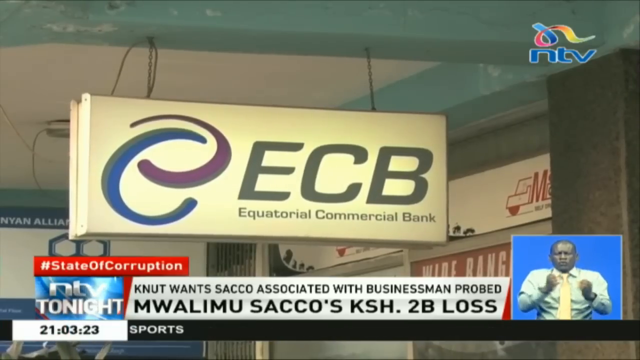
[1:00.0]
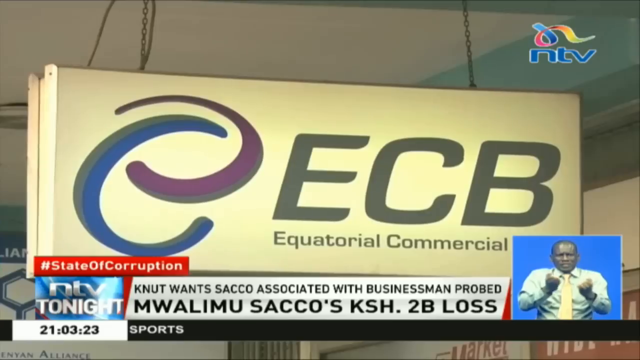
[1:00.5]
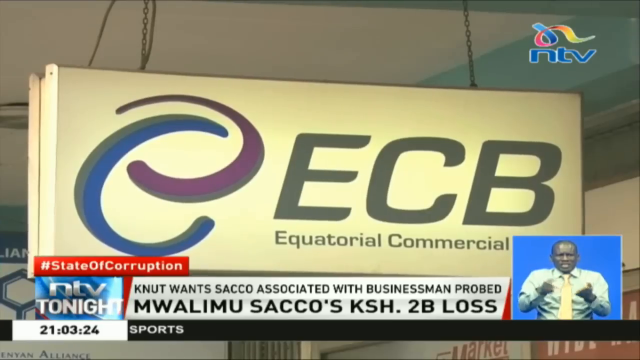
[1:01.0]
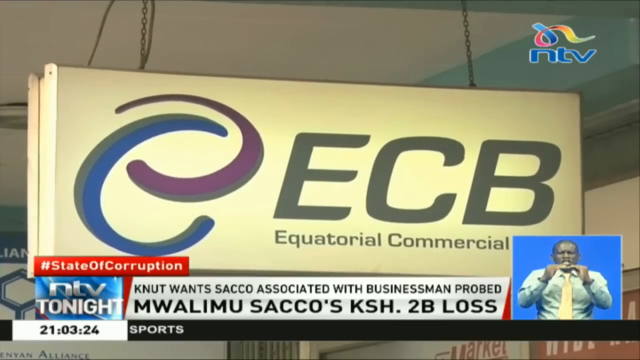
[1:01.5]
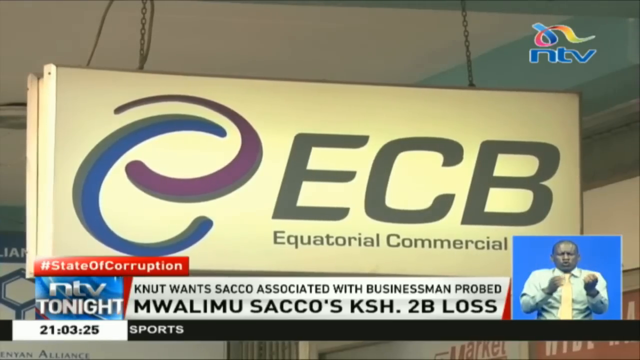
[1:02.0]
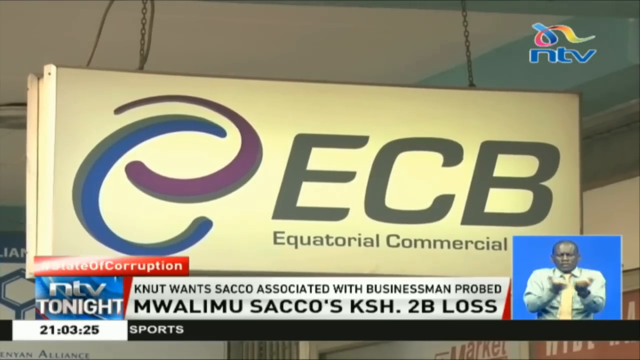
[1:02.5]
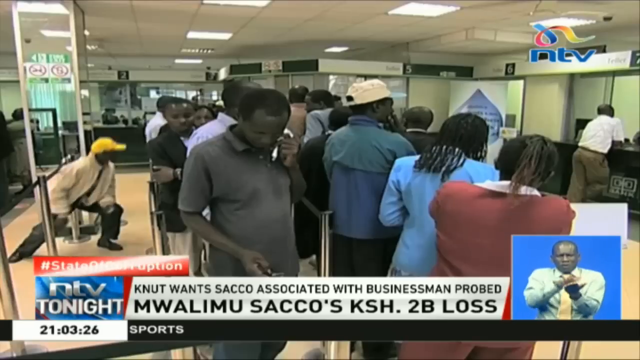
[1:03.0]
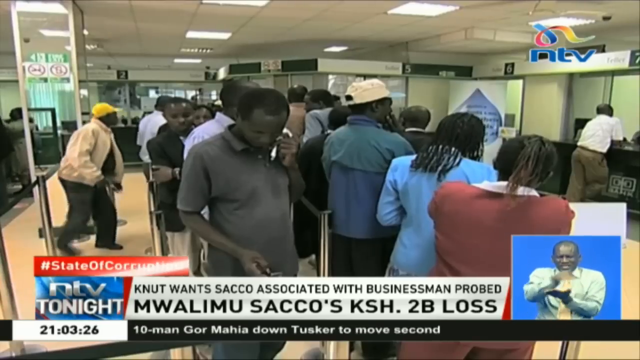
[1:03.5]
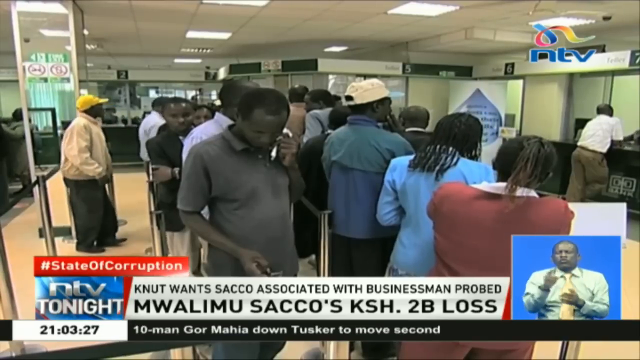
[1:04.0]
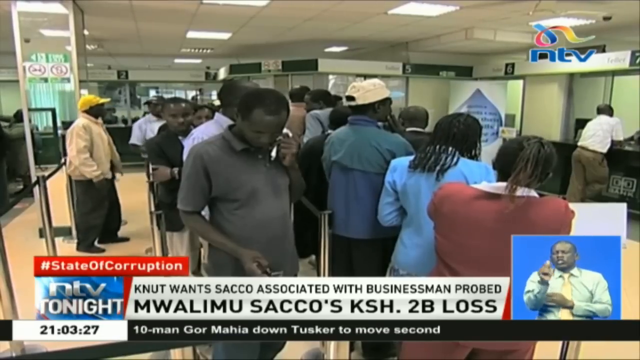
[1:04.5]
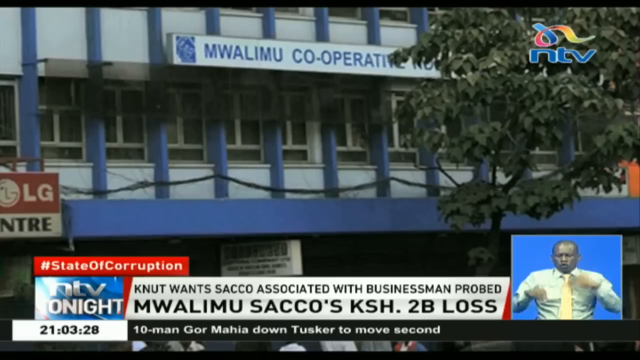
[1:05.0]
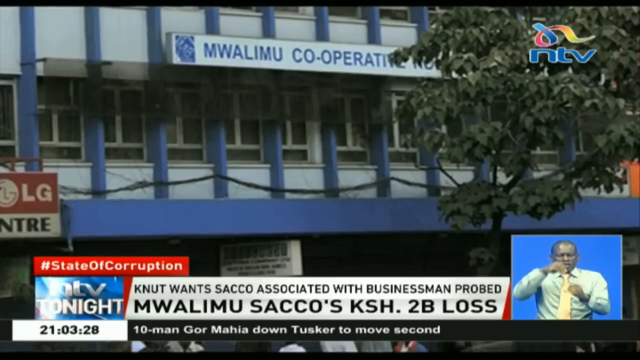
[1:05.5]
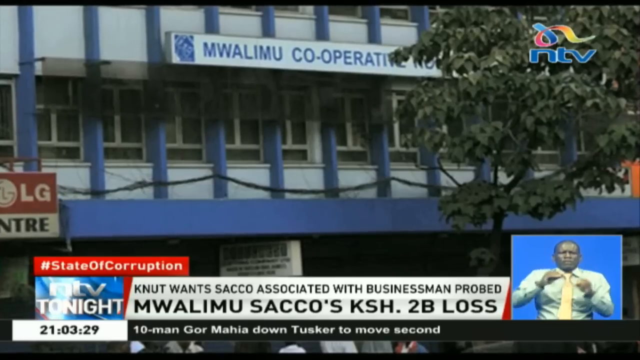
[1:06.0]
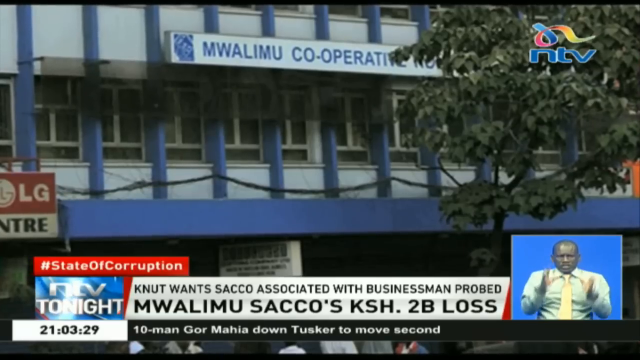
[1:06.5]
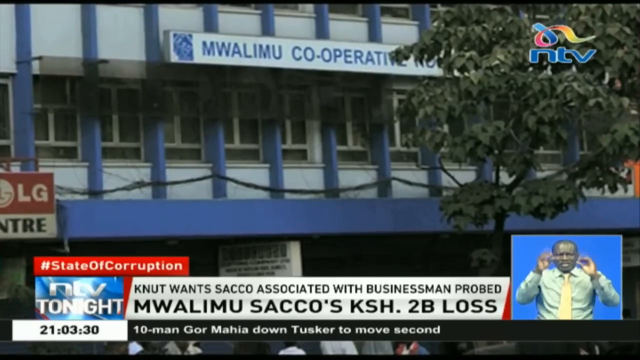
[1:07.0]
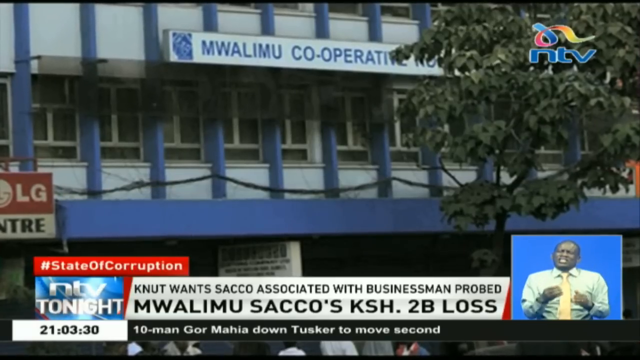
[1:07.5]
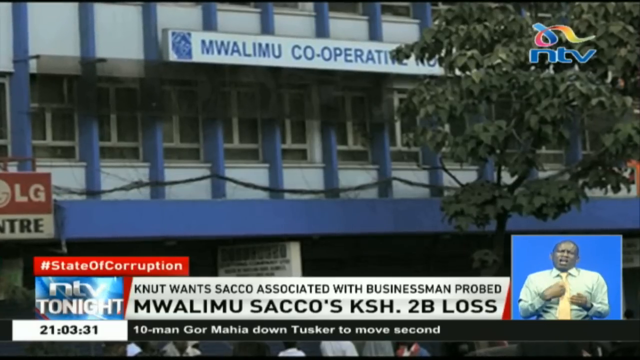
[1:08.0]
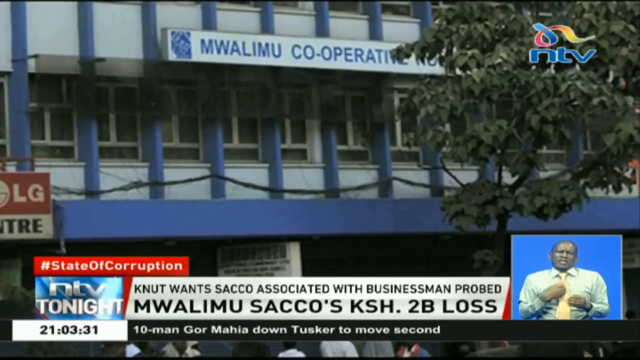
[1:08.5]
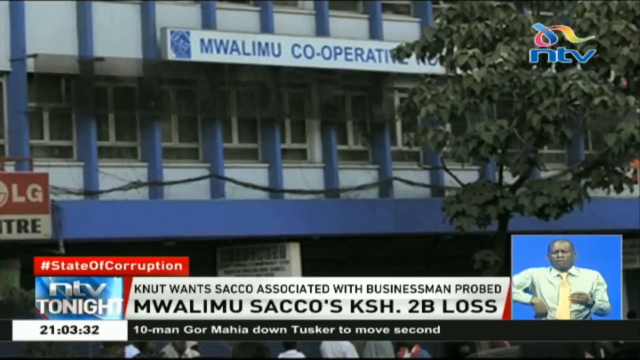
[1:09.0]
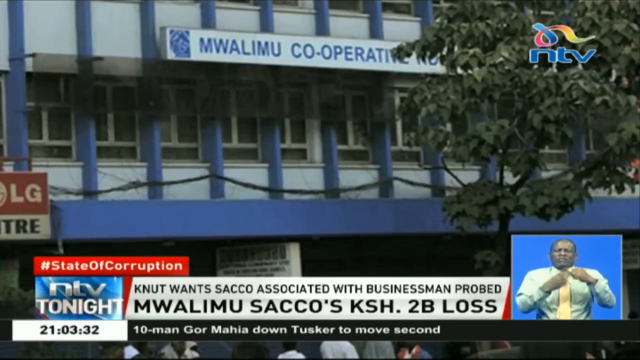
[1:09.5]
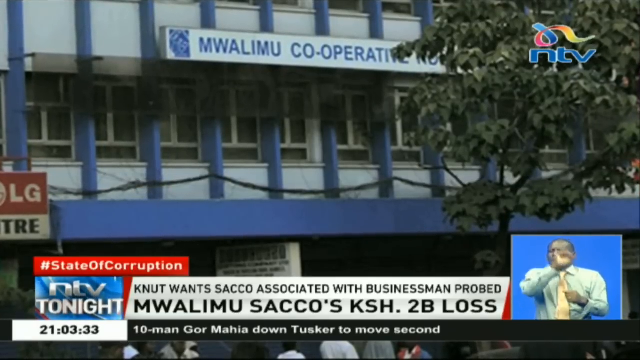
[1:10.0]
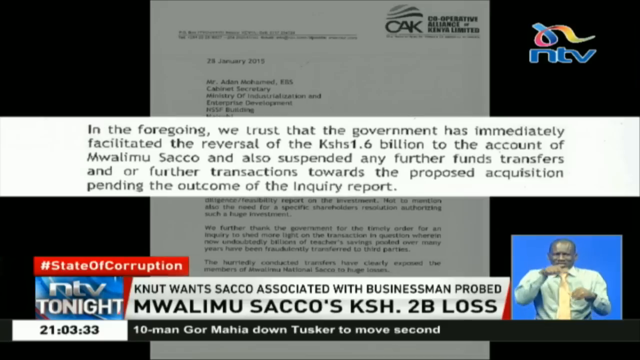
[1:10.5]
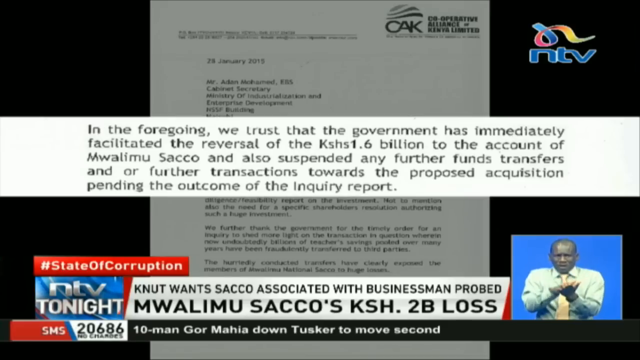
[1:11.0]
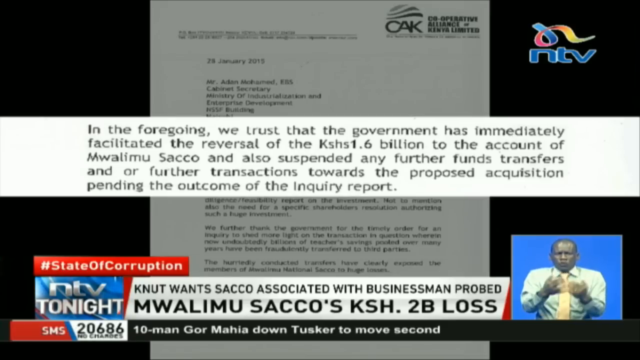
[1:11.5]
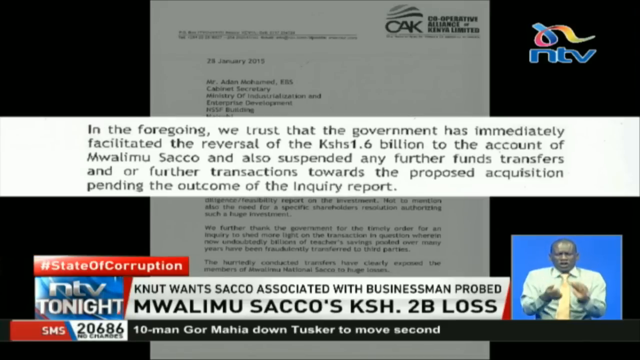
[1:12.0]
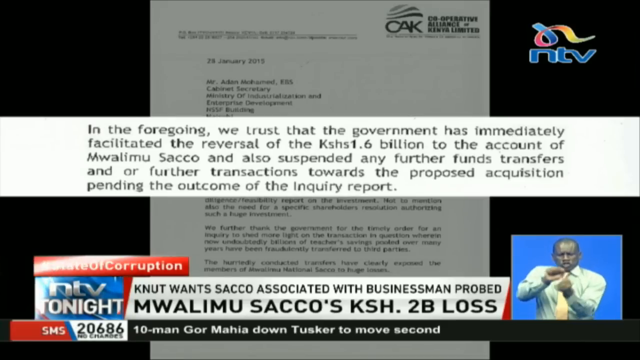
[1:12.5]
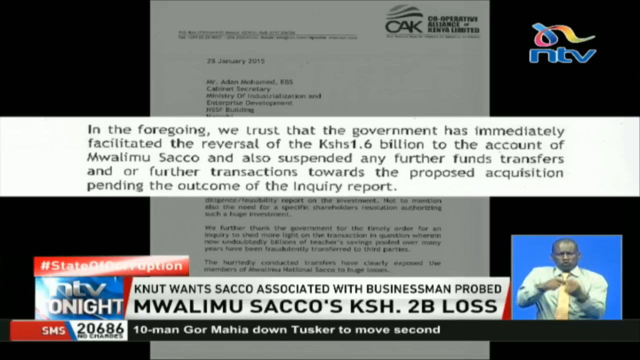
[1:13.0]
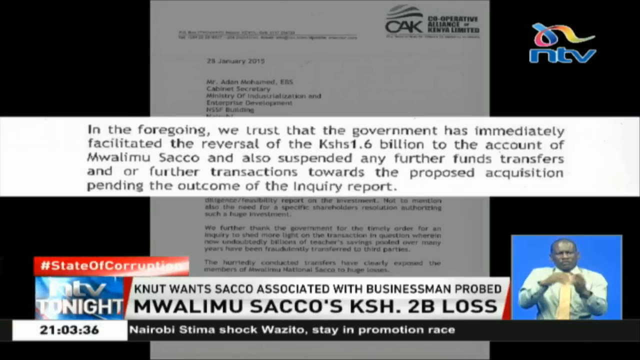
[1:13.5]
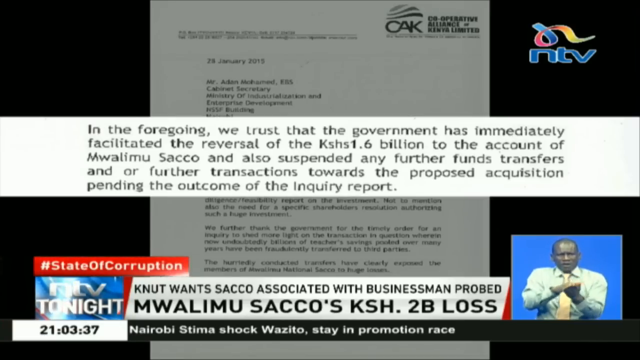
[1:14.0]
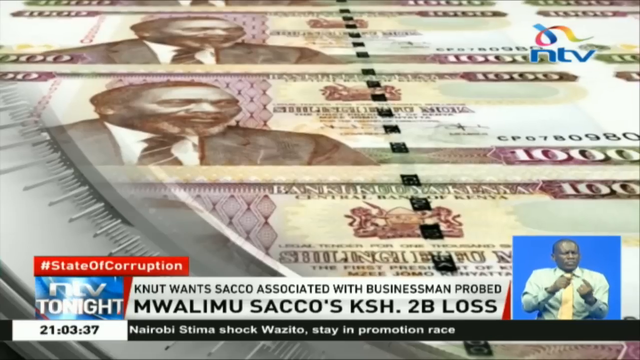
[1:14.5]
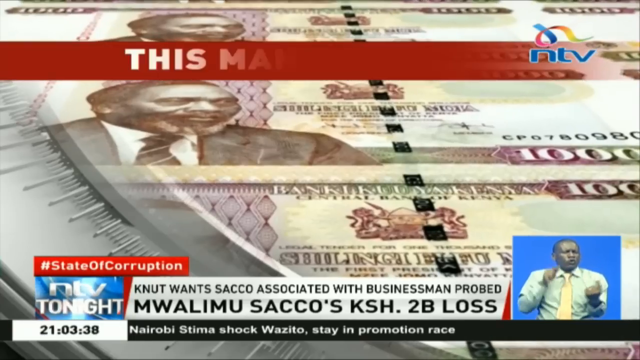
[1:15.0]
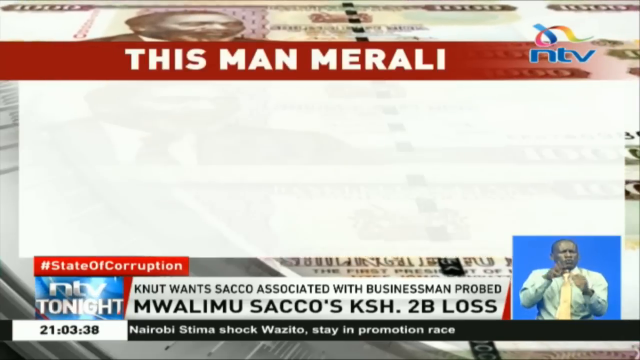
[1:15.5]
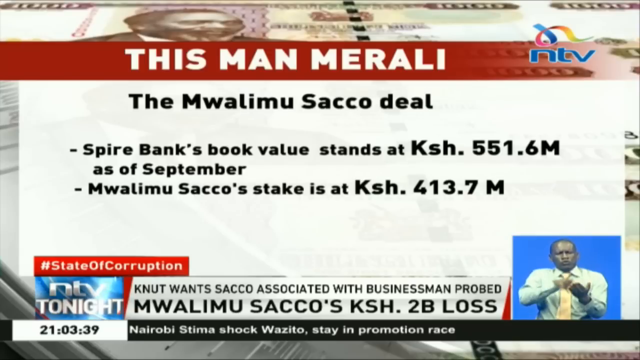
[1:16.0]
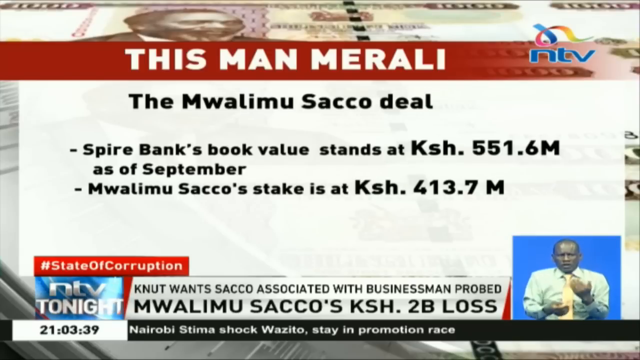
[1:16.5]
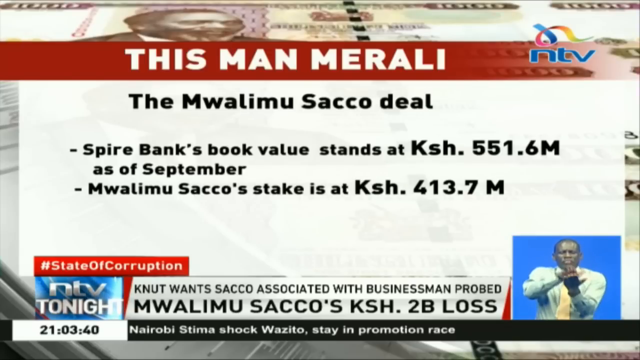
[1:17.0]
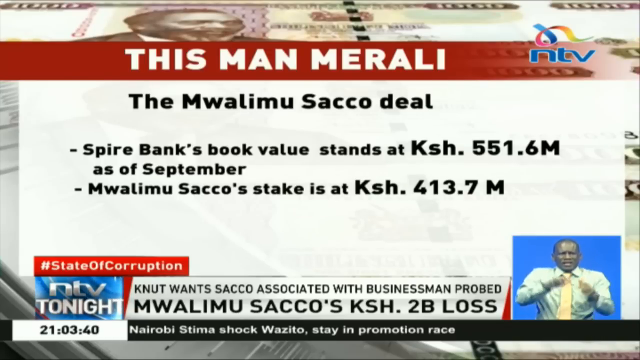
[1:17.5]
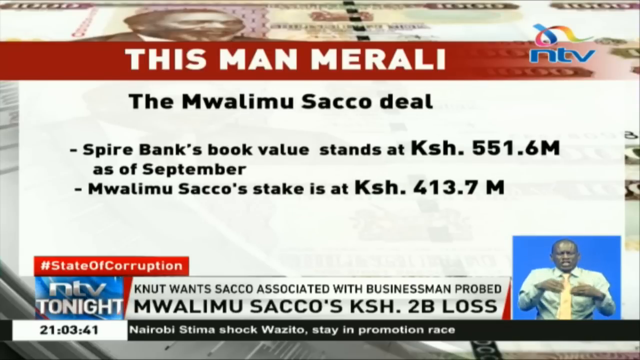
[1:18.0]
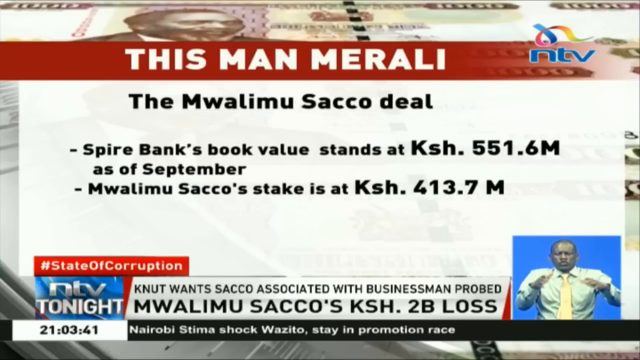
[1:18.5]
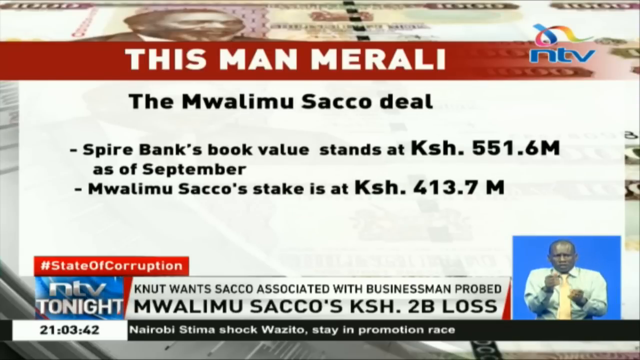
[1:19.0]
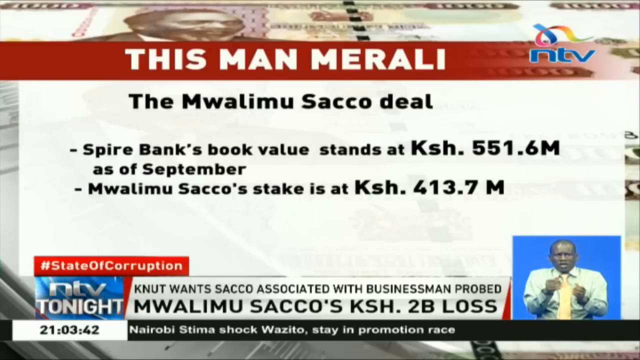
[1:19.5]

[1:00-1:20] On NTV News, the NTV emblem is written in blue in the upper right corner of the screen, with a curling rainbow-coloured ribbon just above it. A large merchant sign reading "ECB" is shown. In the bottom left corner of the screen are "State of Corruption", "NTV Tonight" and "KNUT wants SACO associated with businessman probed", followed by "MWALIMU SACCOs KSH two billion loss". A smaller screen shows a man in his 50s, African, doing sign language for the hearing impaired. Beneath it is a sports headline.